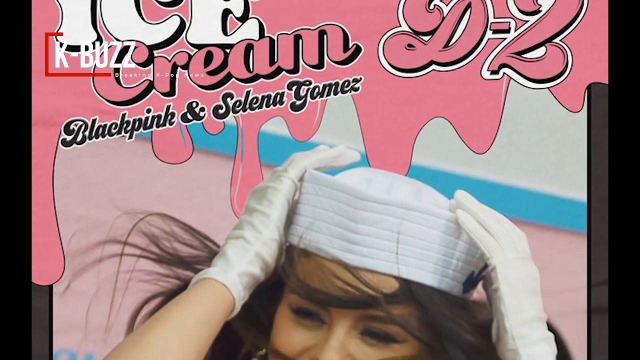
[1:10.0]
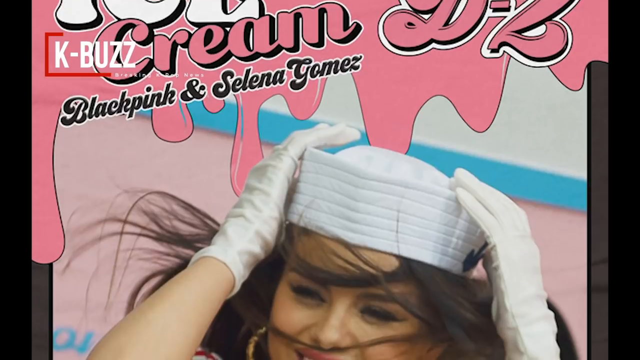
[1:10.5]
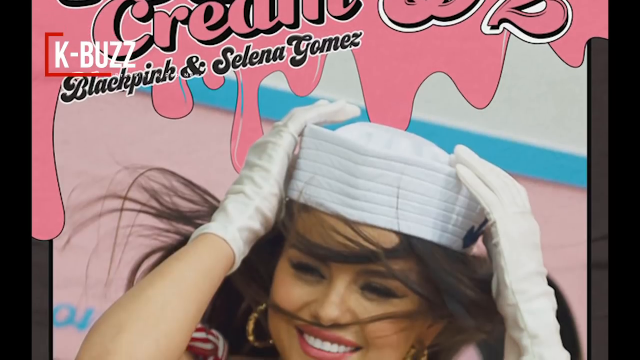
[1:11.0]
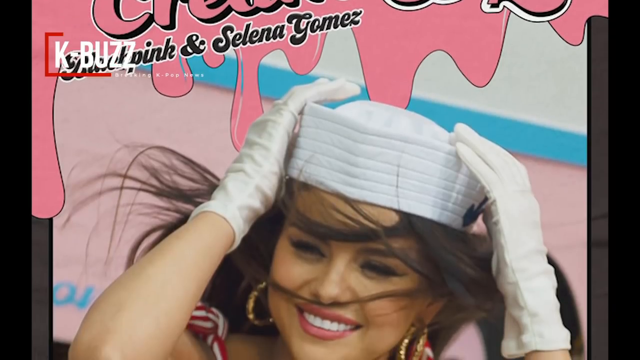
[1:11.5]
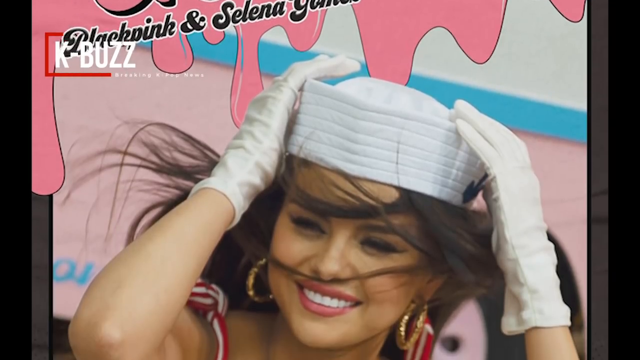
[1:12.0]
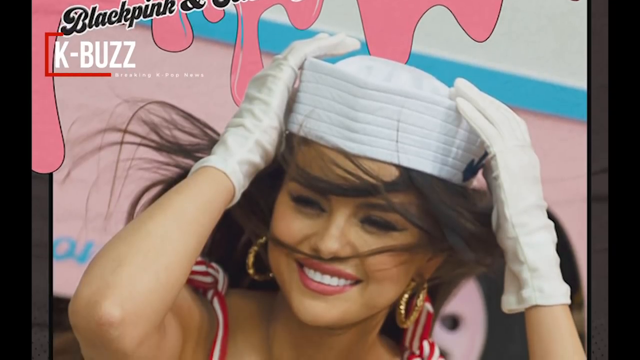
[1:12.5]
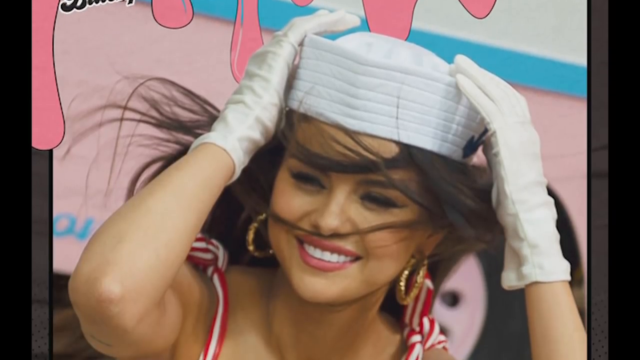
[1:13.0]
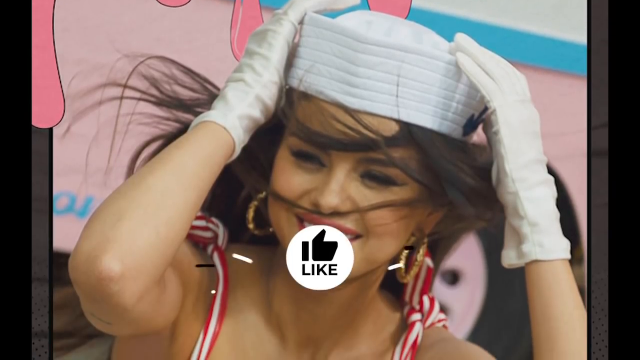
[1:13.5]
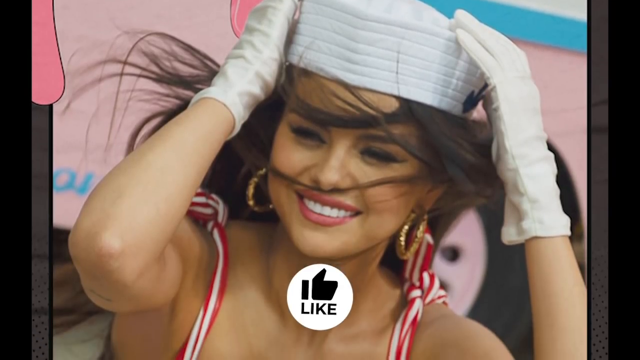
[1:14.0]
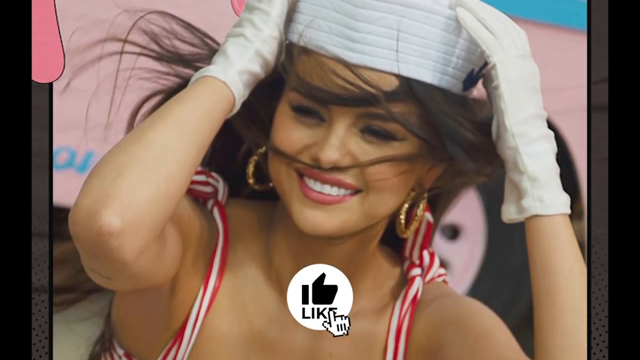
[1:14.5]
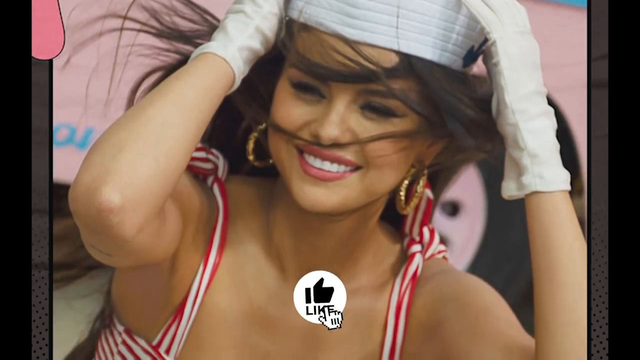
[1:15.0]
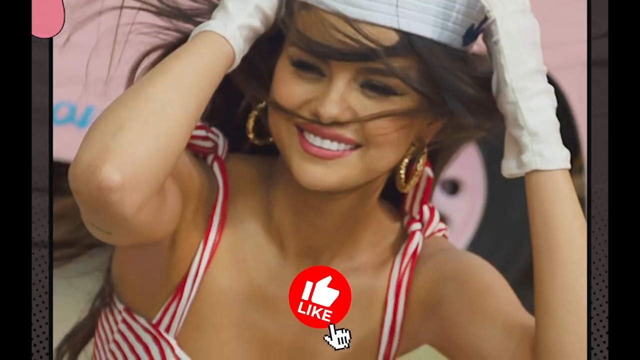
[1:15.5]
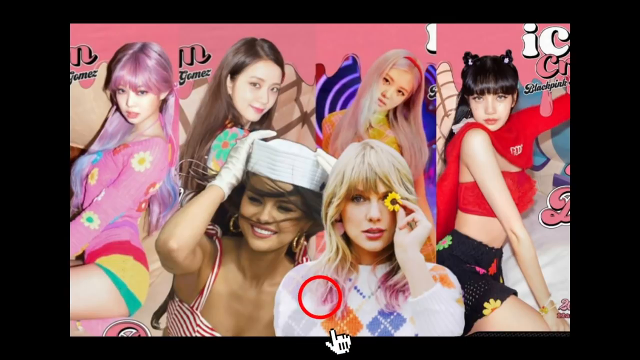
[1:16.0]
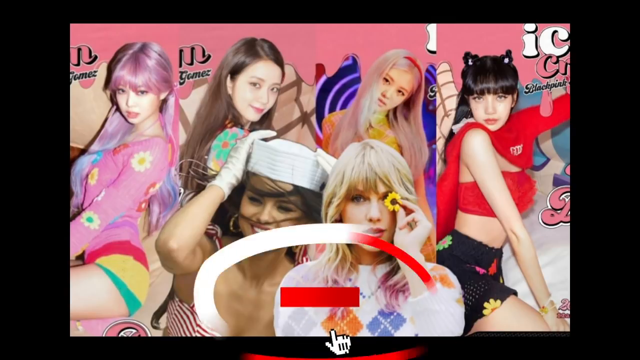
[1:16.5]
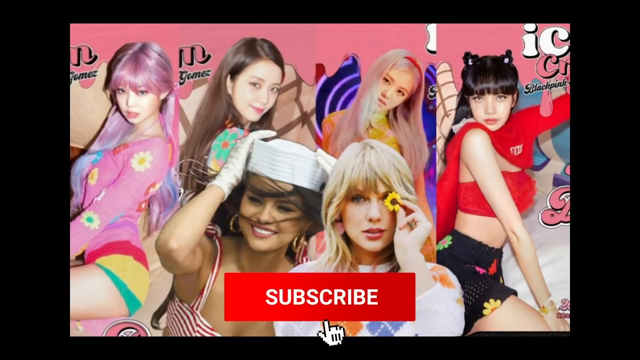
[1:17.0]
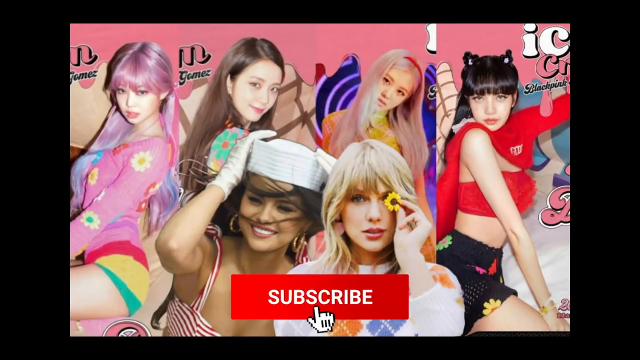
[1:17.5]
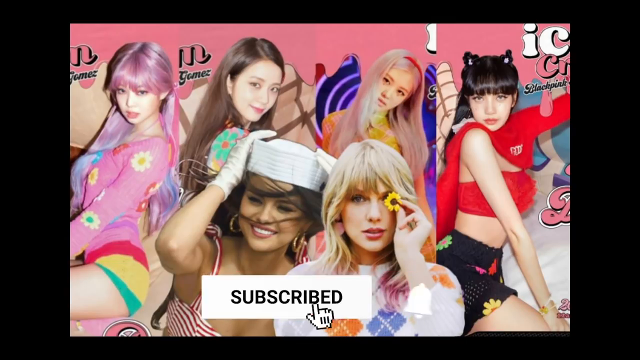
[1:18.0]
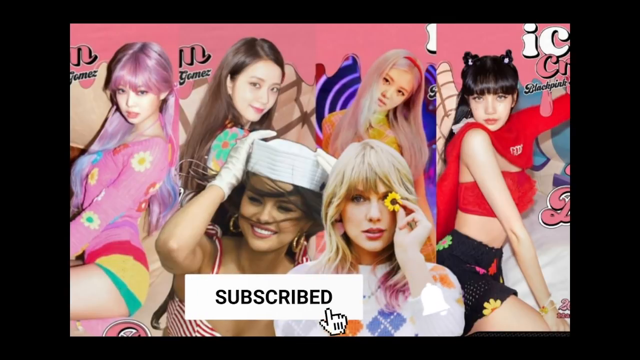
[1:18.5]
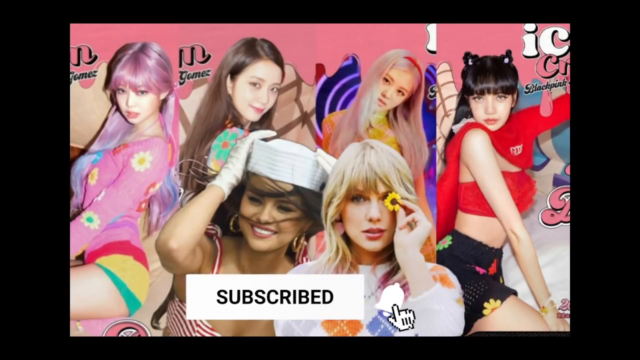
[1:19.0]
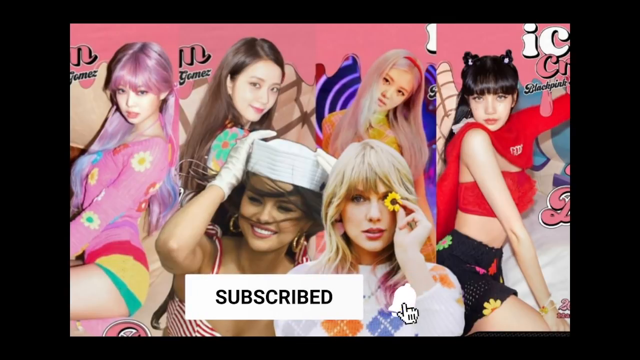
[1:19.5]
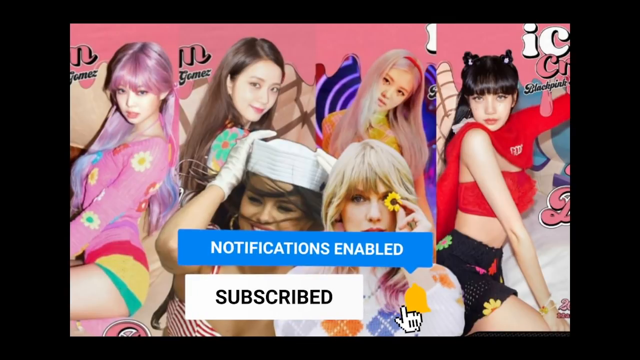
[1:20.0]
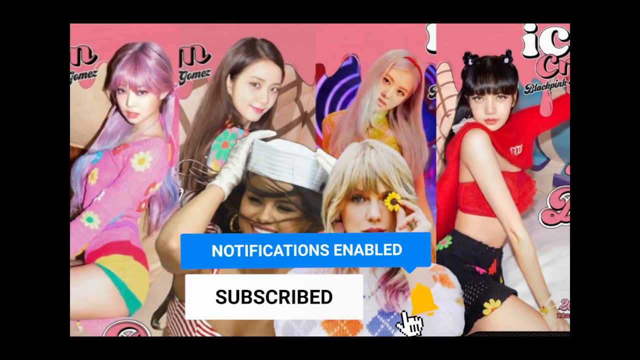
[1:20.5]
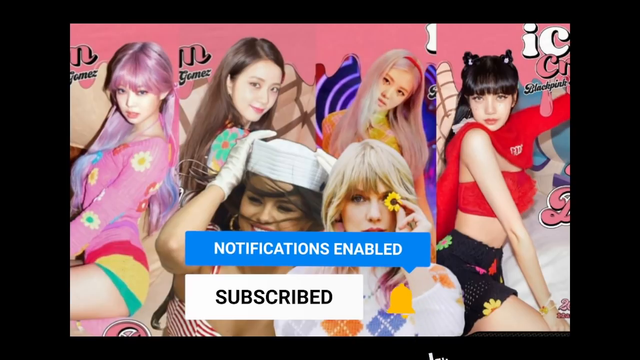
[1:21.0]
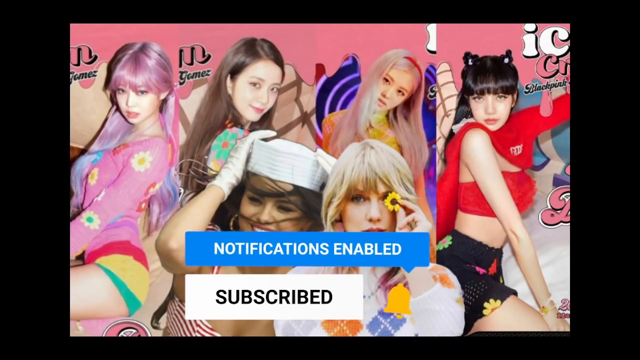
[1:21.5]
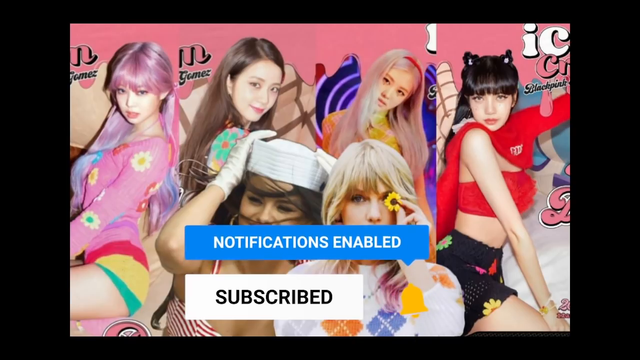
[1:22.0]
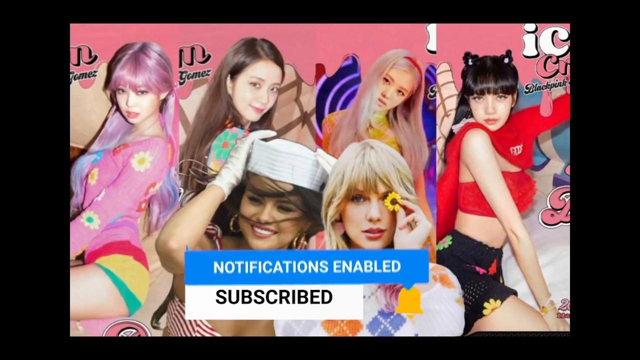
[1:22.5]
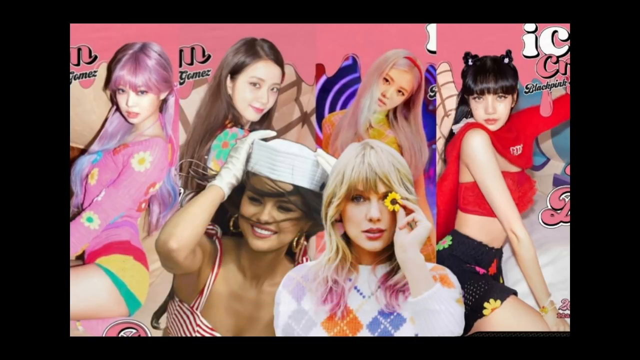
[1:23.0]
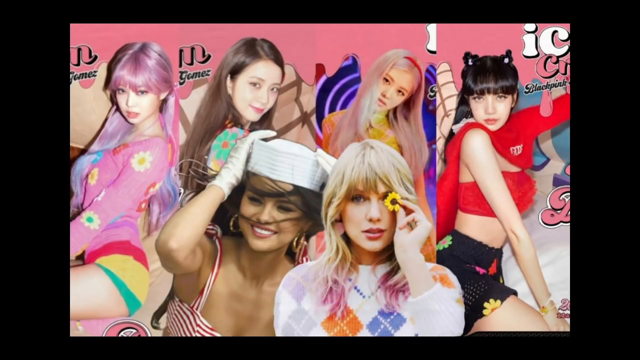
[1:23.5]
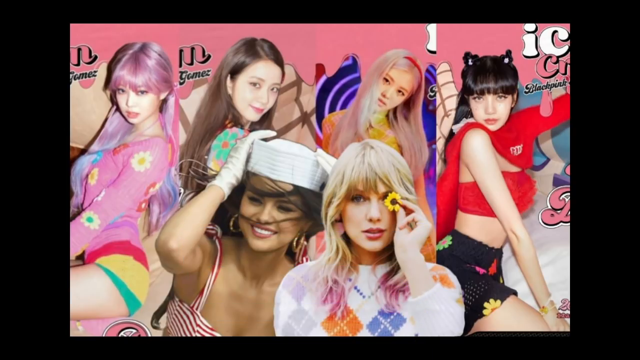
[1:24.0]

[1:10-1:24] The image moves down to show what appears to be Selena Gomez, who seems to be in her 30s. The video scrolls down and an animated reminder to like the video appears in the bottom center of the screen. It starts as a tiny black dot that falls like a liquid, with a dot to its left, then instantly transforms into a ball shape that appears higher up, more towards the middle. Inside the ball or circle is a black button, and black and white sparks come out on the left and right sides of the animation. The ball drops down to the bottom of the page with a bounce, and the animation shows someone pressing the like button, which turns red. In the background, the video cuts to more footage from the images of the collaboration, showing Selena Gomez on the left and Taylor Swift photoshopped to the right. A subscribe animation with a bell appears on the right-hand side, prompting viewers to enable their subscriptions.